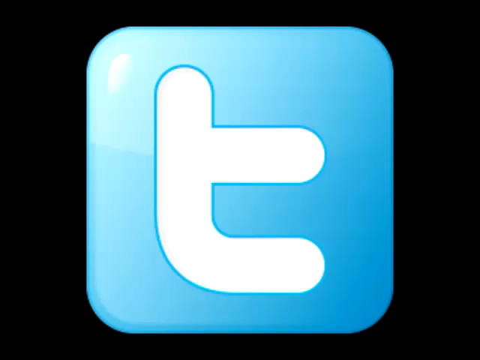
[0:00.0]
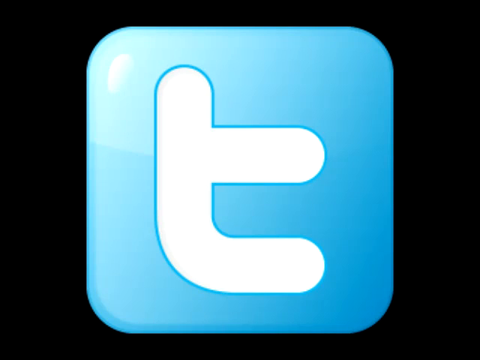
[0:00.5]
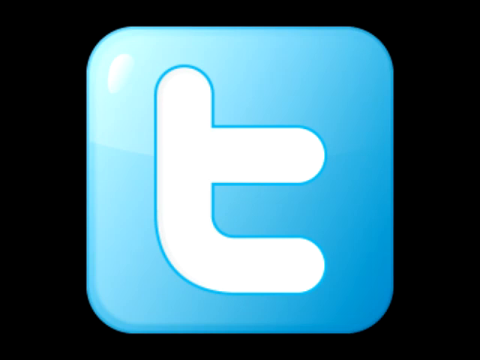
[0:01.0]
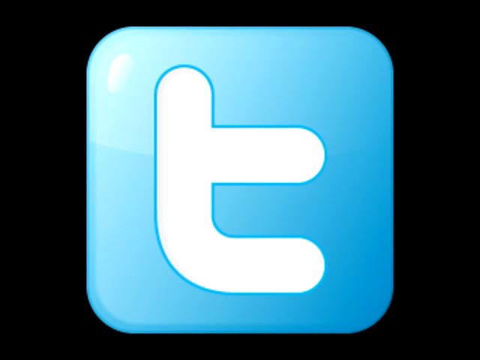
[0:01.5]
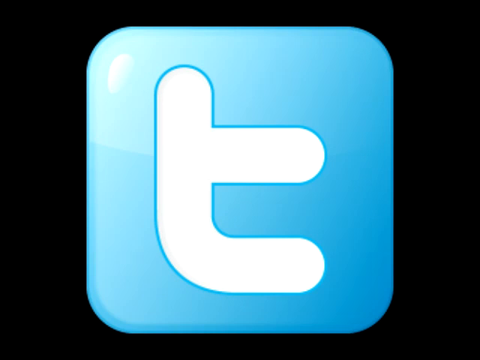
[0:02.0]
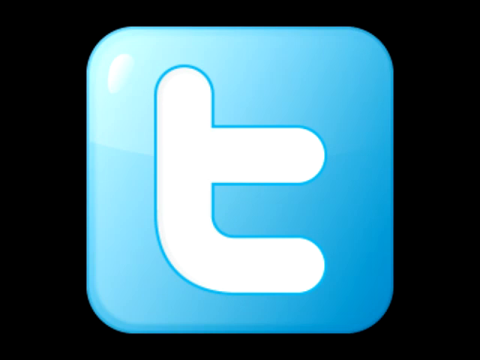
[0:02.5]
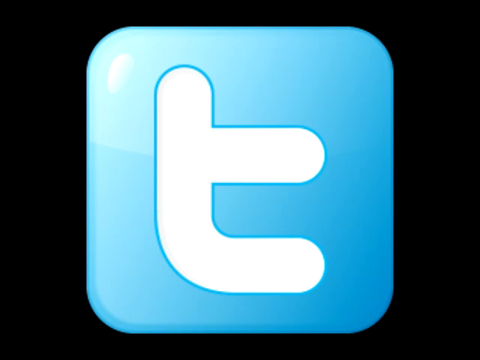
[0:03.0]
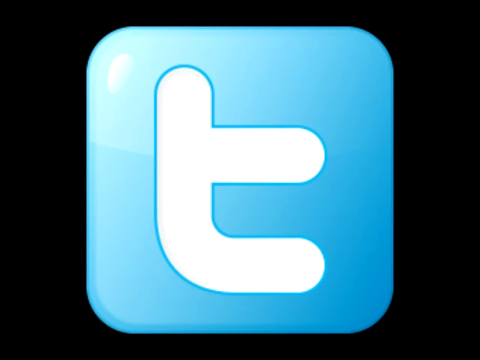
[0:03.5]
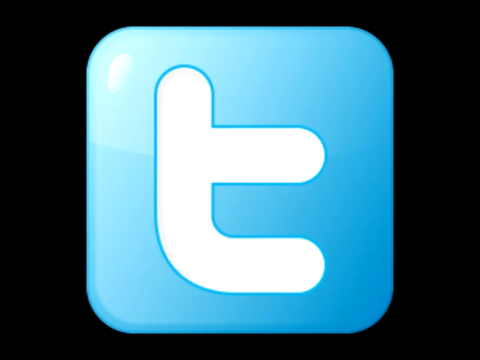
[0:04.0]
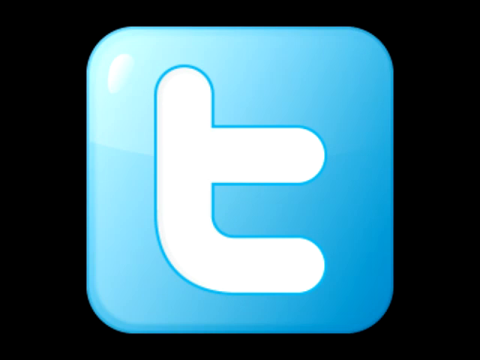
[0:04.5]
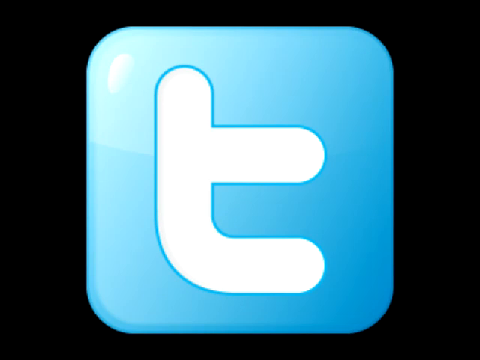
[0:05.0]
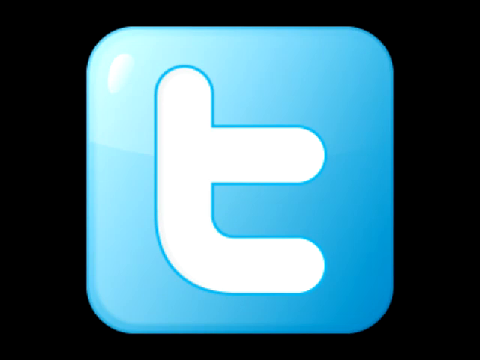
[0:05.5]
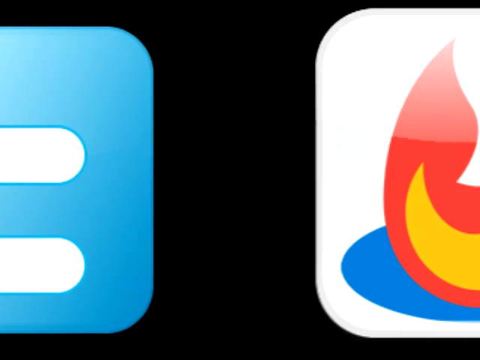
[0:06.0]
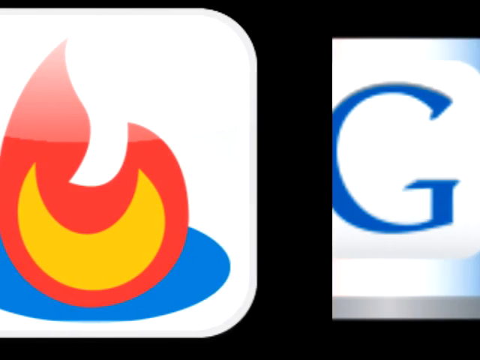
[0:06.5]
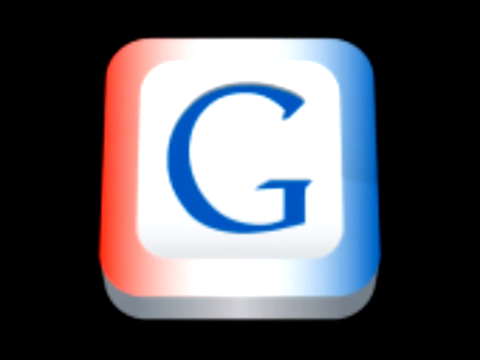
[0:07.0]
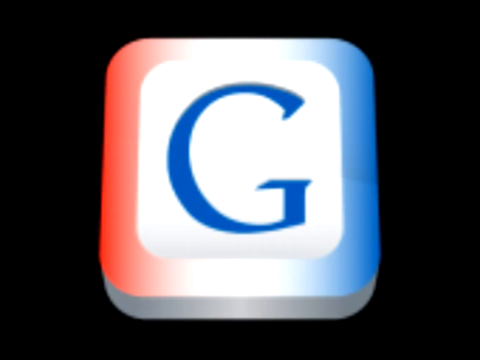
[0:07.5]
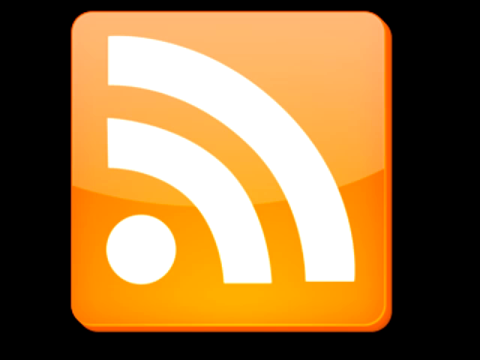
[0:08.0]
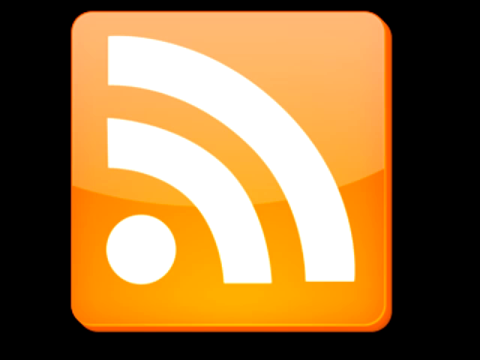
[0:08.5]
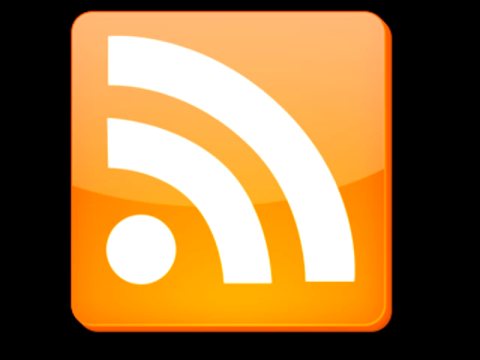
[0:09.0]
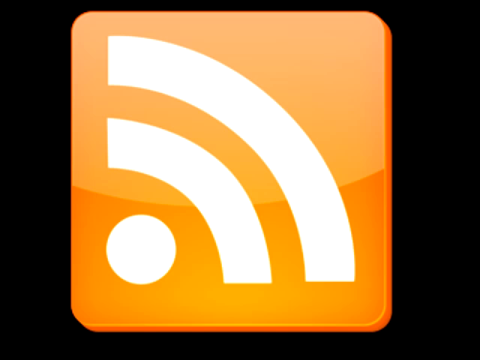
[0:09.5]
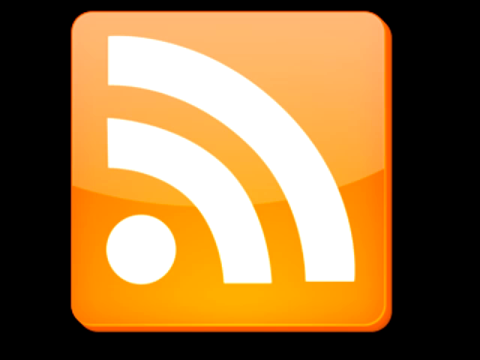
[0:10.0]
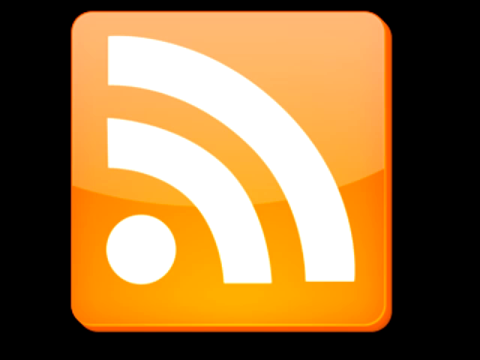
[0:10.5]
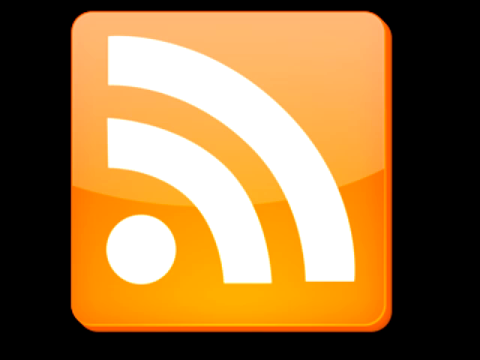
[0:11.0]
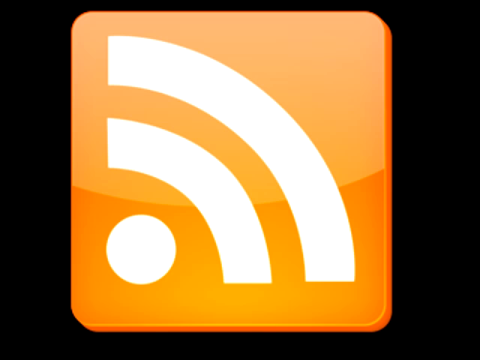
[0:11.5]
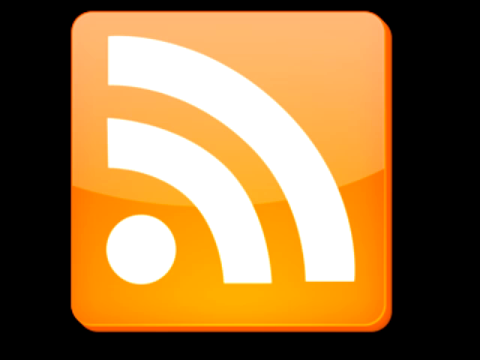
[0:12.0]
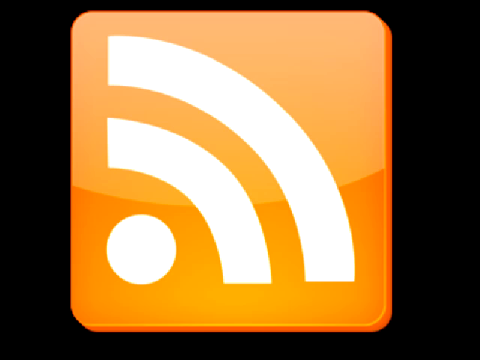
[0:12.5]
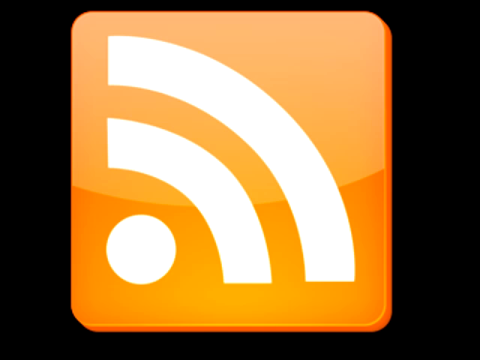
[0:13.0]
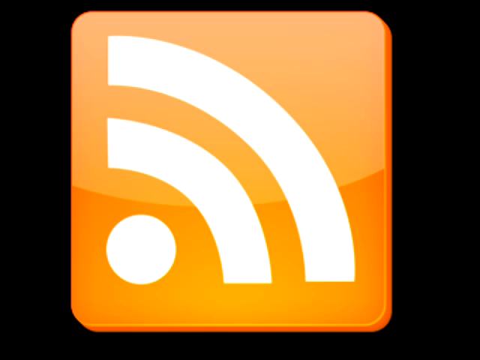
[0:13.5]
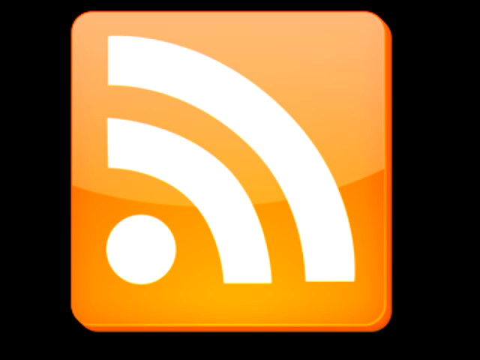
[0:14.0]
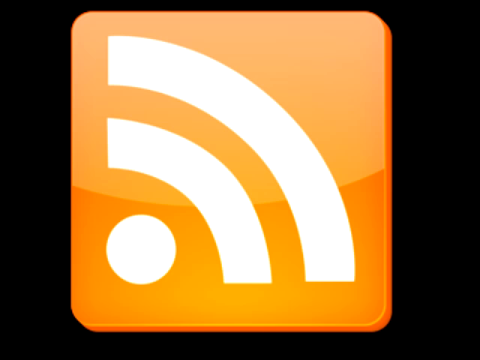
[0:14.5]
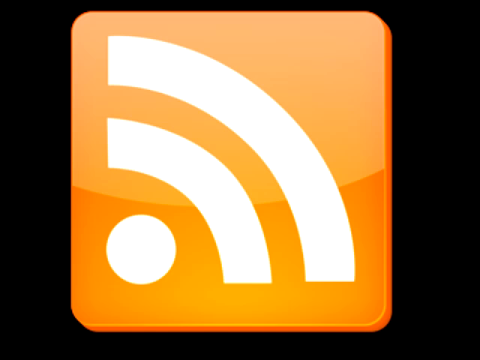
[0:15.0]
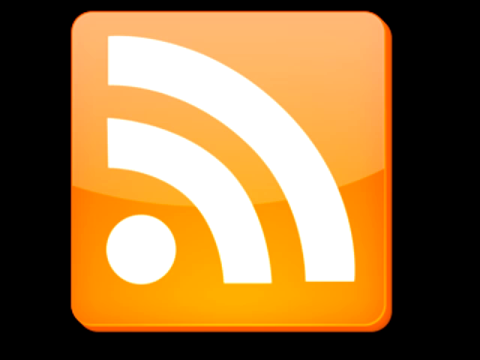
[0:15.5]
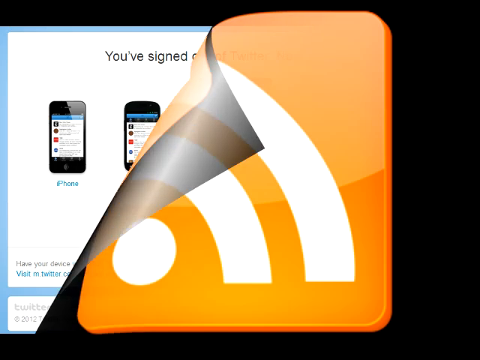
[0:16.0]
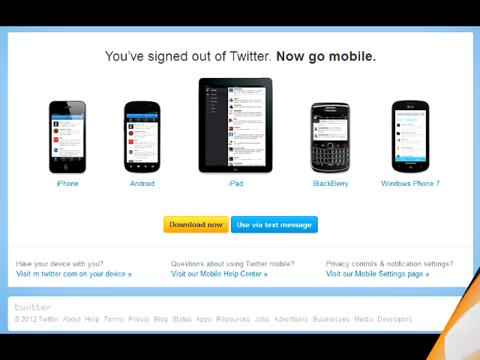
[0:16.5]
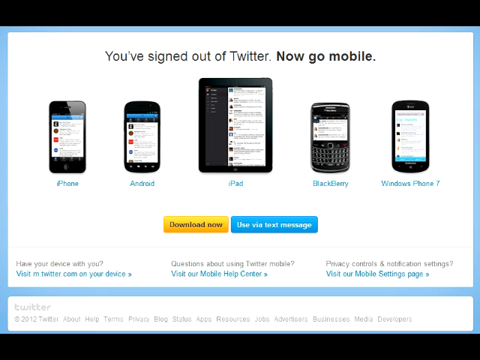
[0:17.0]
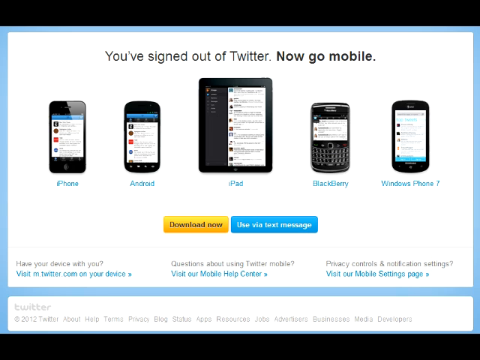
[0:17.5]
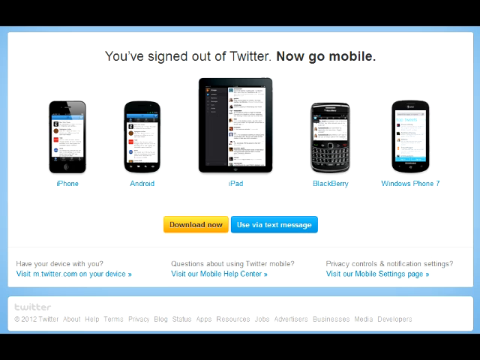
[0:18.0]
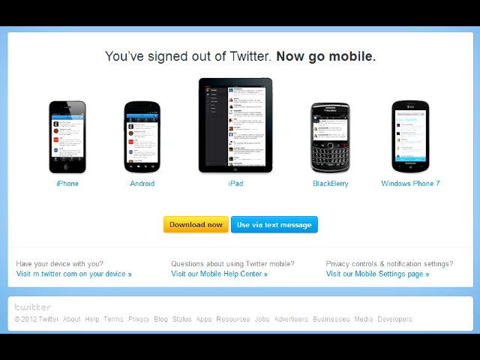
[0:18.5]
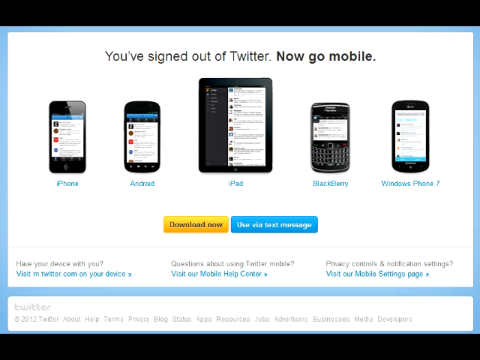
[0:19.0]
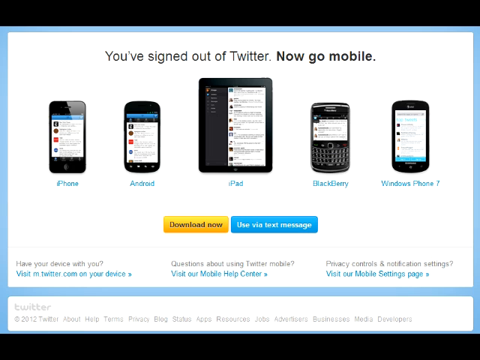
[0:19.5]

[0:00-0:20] The video opens with a graphic icon on a black background: a light blue square with heavily rounded corners that appears to have a bit of a 3D look, with the top left corner lighter, as if more light falls on it, and the bottom corner darker, perhaps to make it look more like a gradient. In the center of the square is something that looks like a lowercase "t" in almost a bubble-letter style. Several other icons then scroll across the display from right to left. One of them is an orange square icon, also with rounded corners, that is not solid orange but appears to be a two-toned orange, a little darker on the bottom and a little lighter on the top; on it is what appears to be sort of a Wi-Fi signal in white, with one blue circle sort of in the bottom left corner followed by two white arcs. The next slide says "you've signed out of Twitter, now go mobile" and shows several different devices the app is available for. There is a yellow button that says "download now" and beside it a light blue button that says "use via text message." The devices shown, each with an image, are iPhone, Android, iPad, Blackberry and Windows Phone 7.